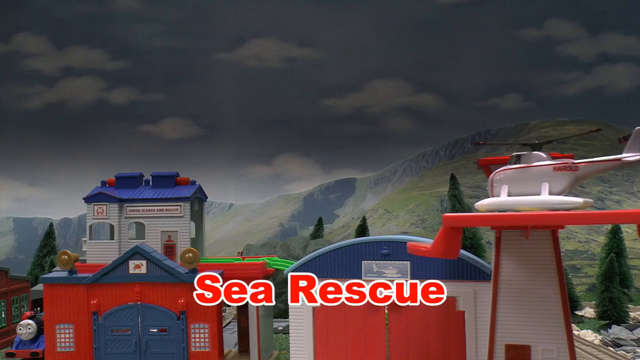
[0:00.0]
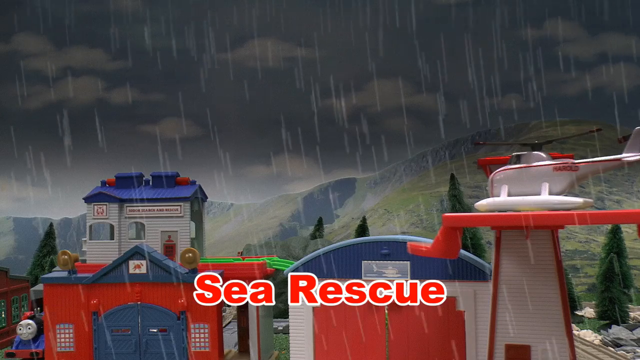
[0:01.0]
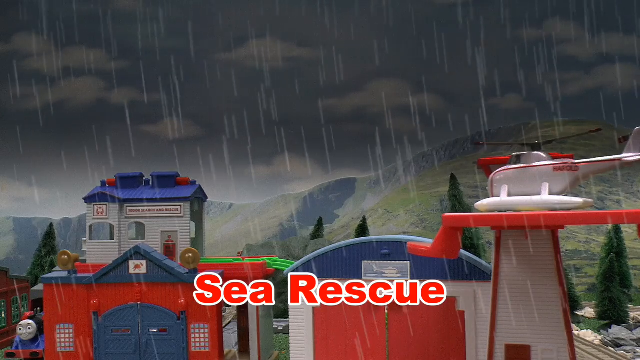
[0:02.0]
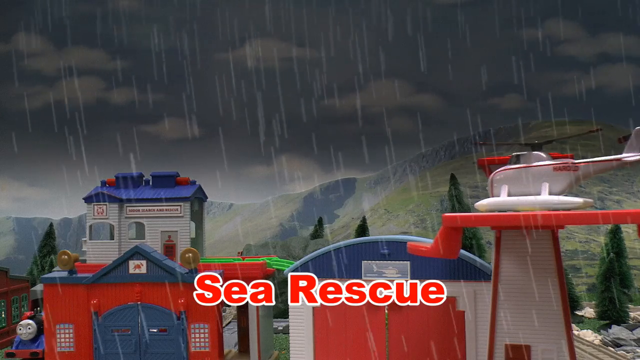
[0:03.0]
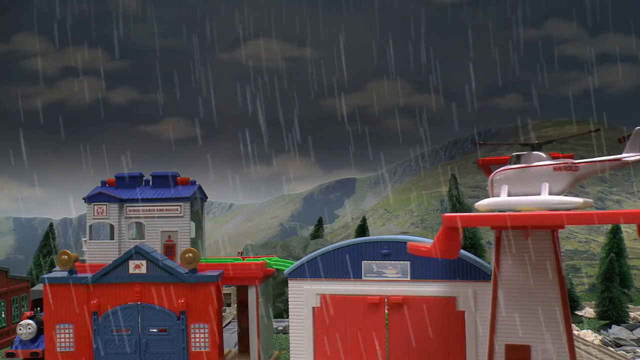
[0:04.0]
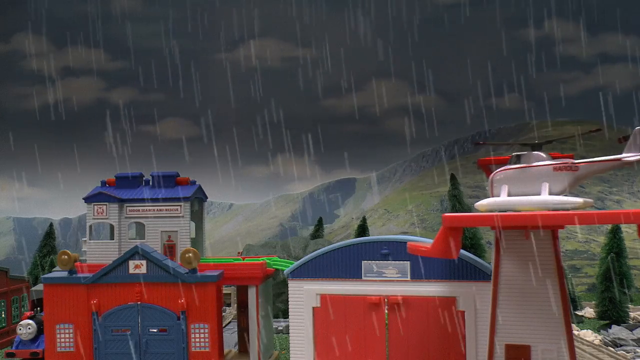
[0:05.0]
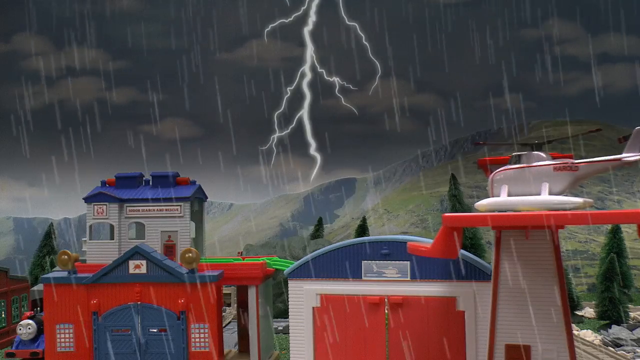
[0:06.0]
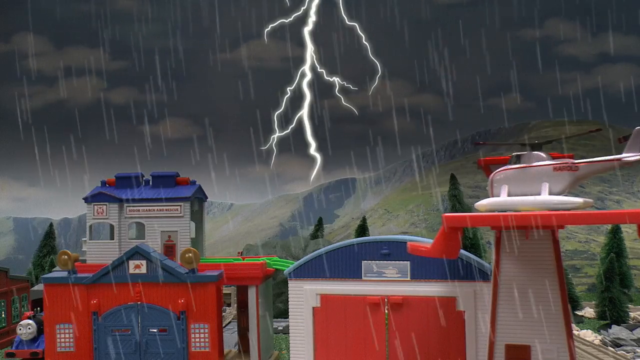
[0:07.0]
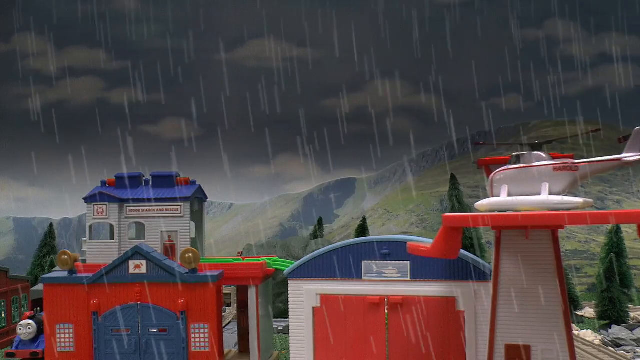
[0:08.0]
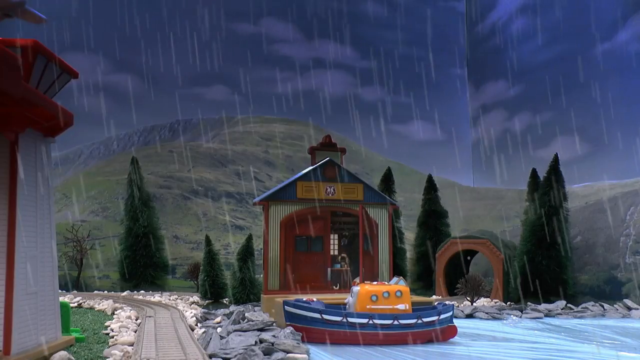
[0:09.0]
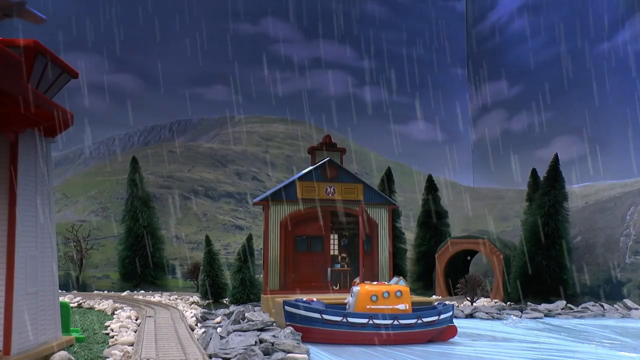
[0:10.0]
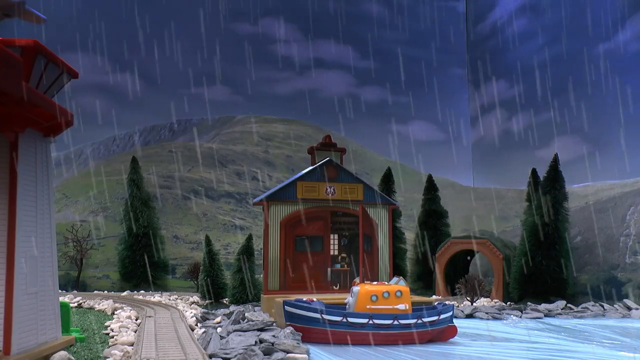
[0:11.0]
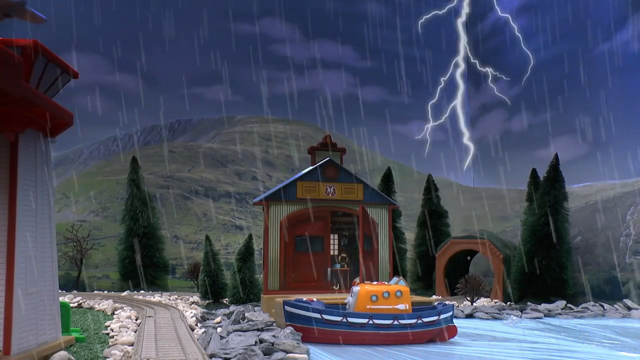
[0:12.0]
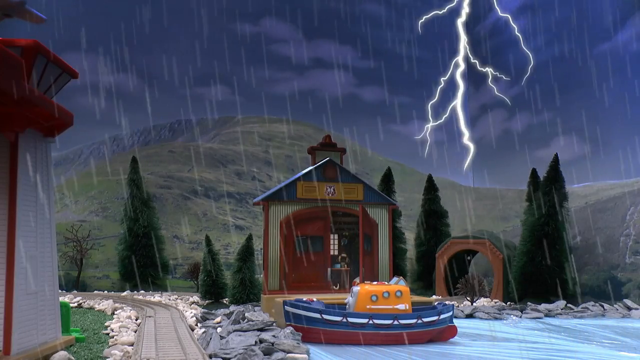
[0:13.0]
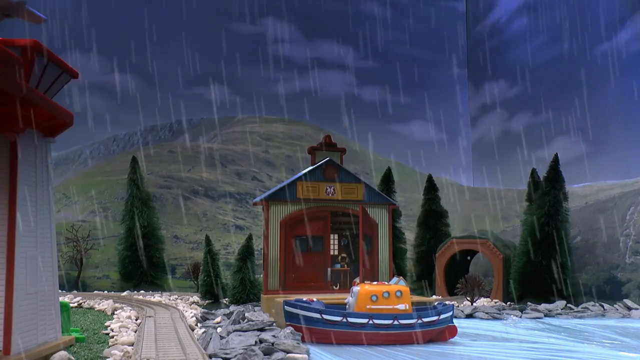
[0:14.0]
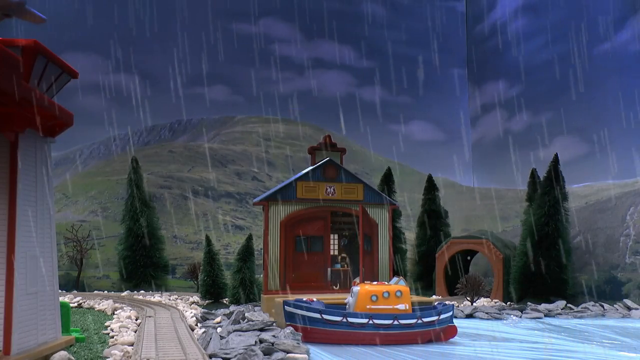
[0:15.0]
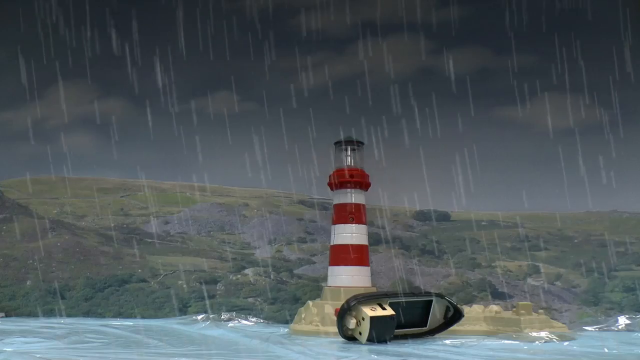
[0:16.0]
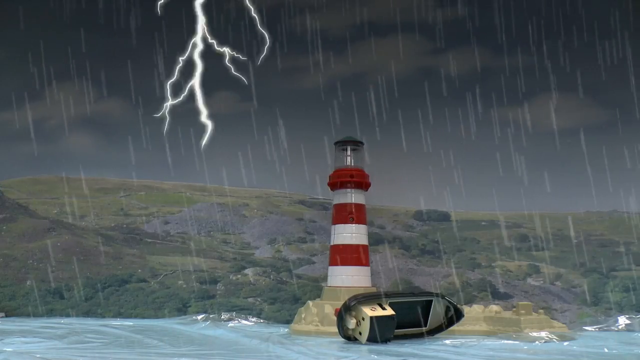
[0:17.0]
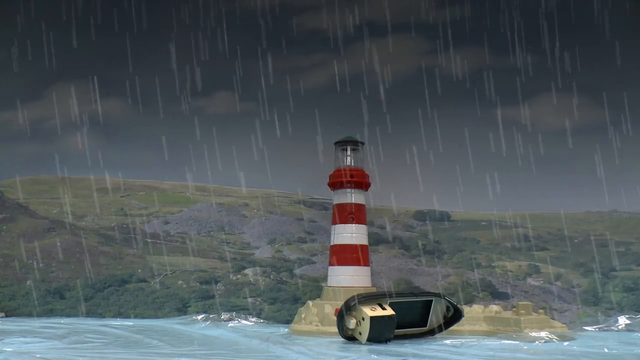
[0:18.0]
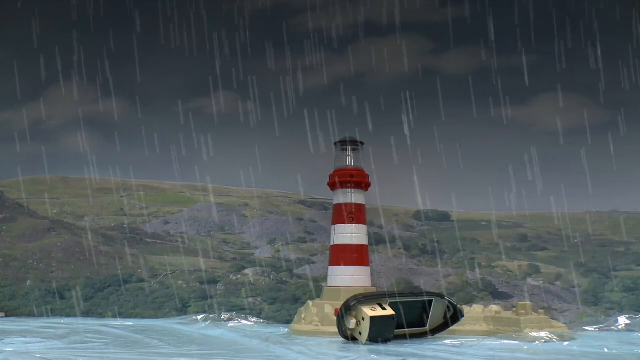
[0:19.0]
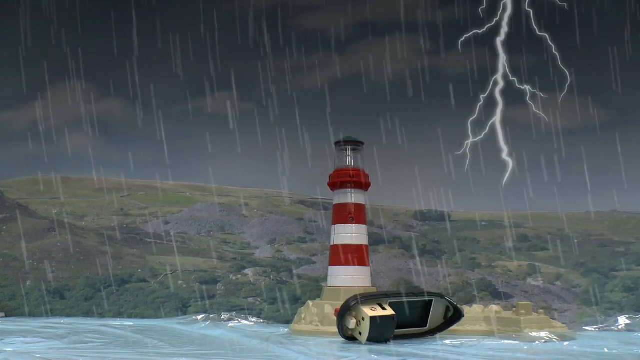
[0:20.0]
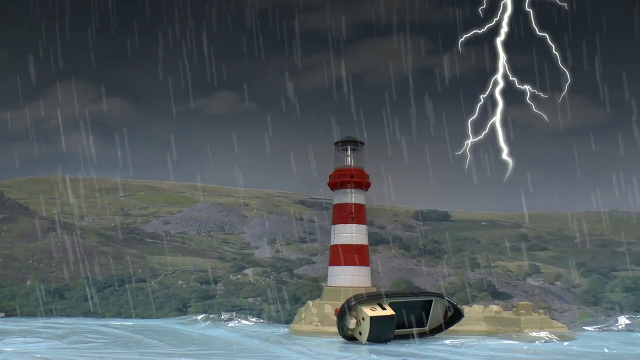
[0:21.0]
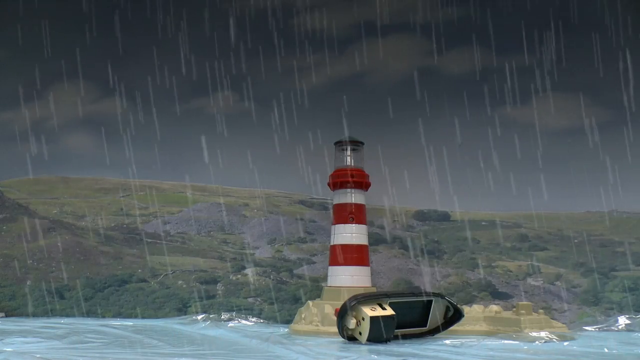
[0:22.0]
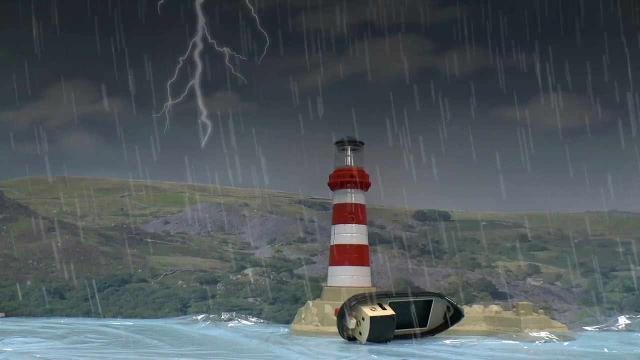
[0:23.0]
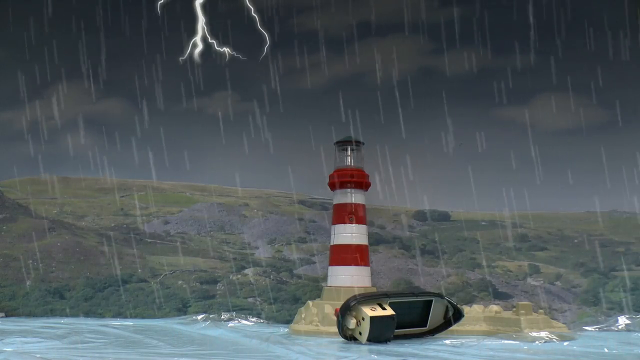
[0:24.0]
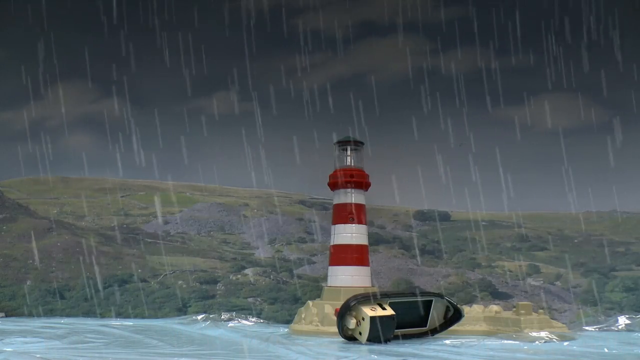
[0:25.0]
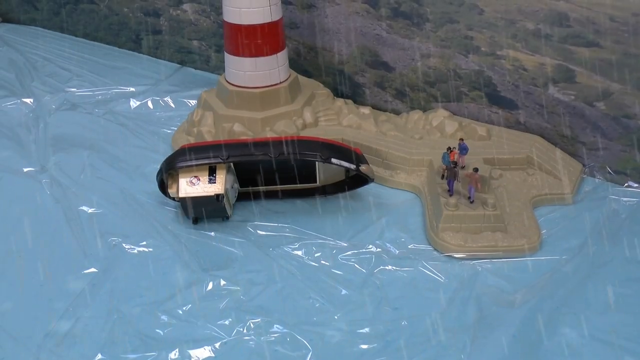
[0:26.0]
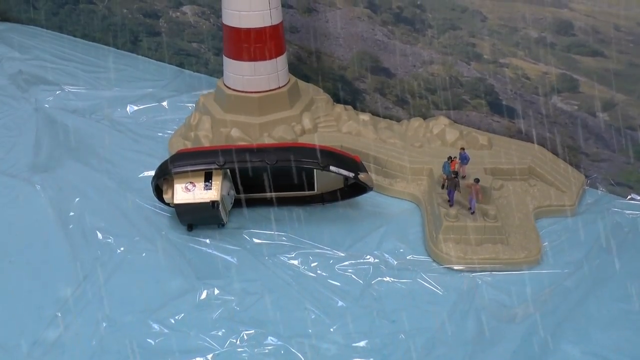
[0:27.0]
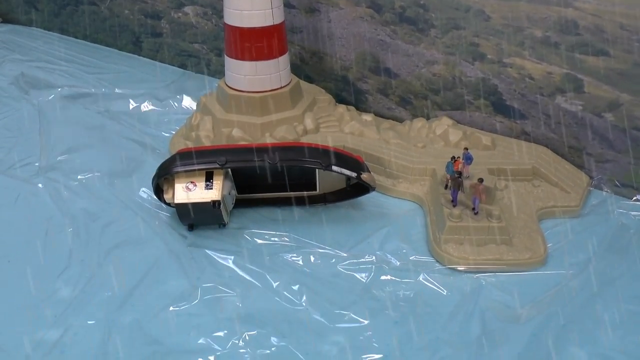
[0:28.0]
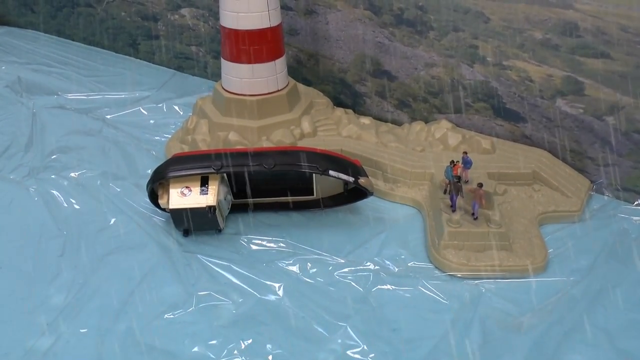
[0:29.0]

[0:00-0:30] A cartoon opens on a stormy sky with rain coming down and a big mountain range across the back. About five trees in the bottom right stretch over to the left. In the front left is a red building with a gray top, and on top of it is another little gray building with blue on top; the scene looks like a little playset. There are red garage doors, gray with blue arching over the top of them. A helicopter pad, also red and white, holds a white and red helicopter with a black blade and floats underneath like those on airplanes that land on water; it faces left. Across the bottom, orange text says "sea rescue" as the rain keeps pouring down heavily. Lightning strikes in the center three times in a row. The shot cuts to a different part of the set: the edge of the helipad is visible on the left, with mountains in the background and some trees across. A little garage has two big red doors, the right one open. In front of it is a little pool or a boat carrying what looks like Thomas the train engine, with a little tunnel, like a train tunnel, up to the right of him and a road coming in from the left going down. The boat with the train engine is in the water. Next, a red and white lighthouse with a light on top appears, with lightning striking in the top left. A capsized boat is at the bottom base of the lighthouse, its inside facing the camera. More lightning strikes on the right side, then on the left. An overhead shot looks down at the boat, just left of center, with the house cut off at the top above it. People stand on a little plastic platform, and there is something white that looks like plastic. Rain is still coming down, and the plastic moves a little.